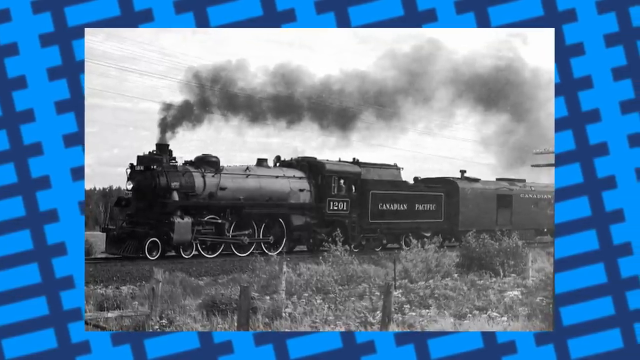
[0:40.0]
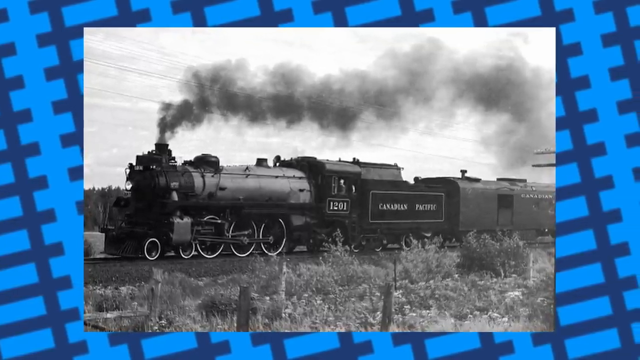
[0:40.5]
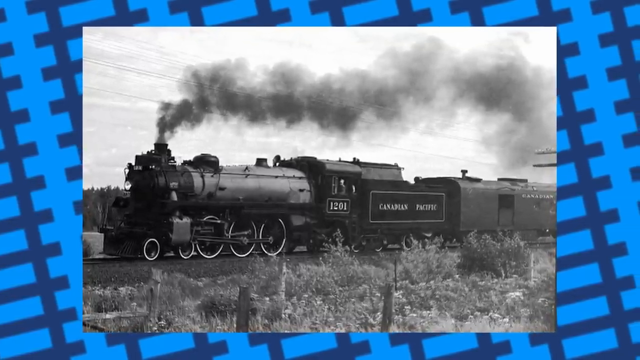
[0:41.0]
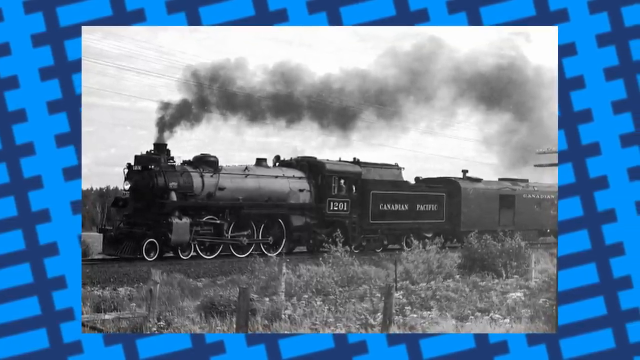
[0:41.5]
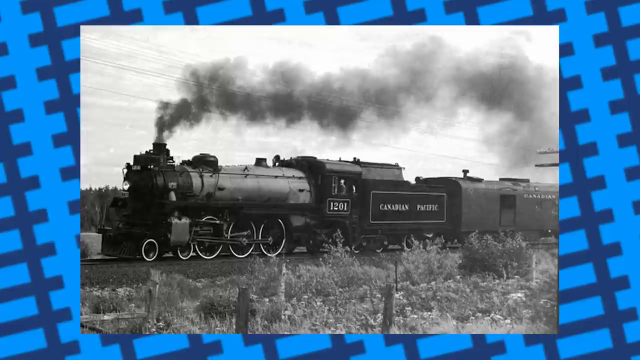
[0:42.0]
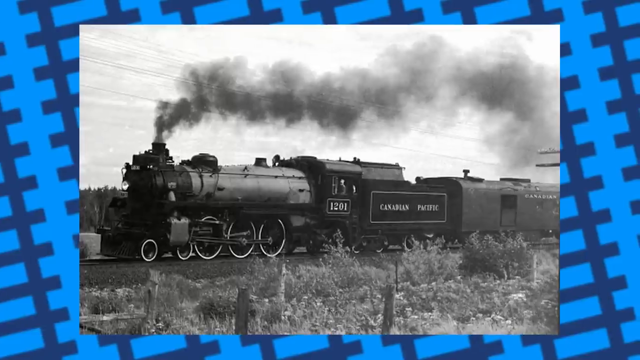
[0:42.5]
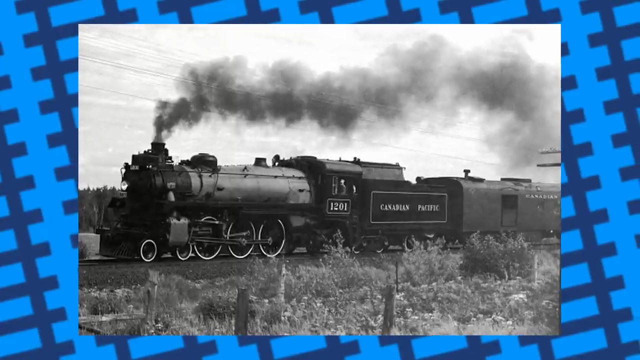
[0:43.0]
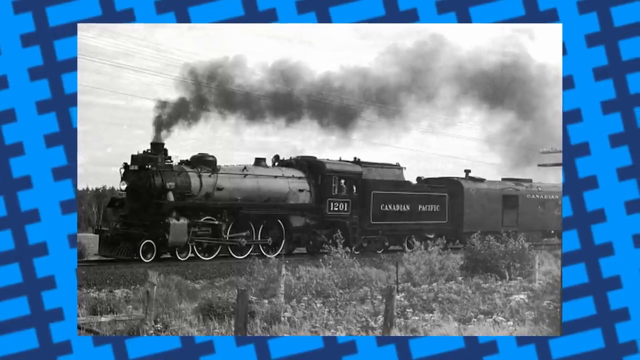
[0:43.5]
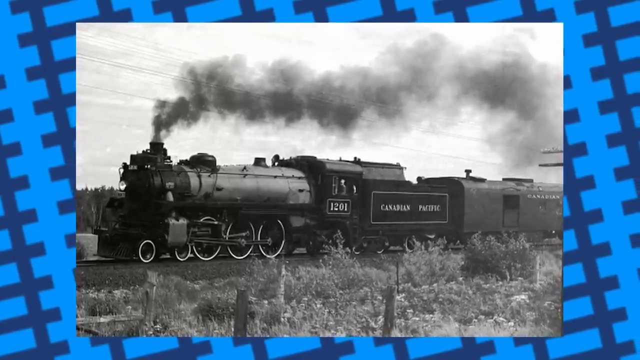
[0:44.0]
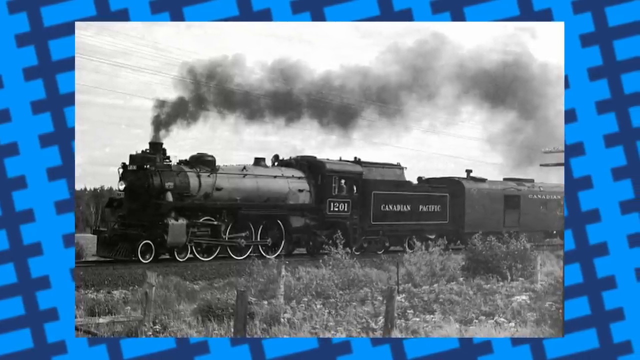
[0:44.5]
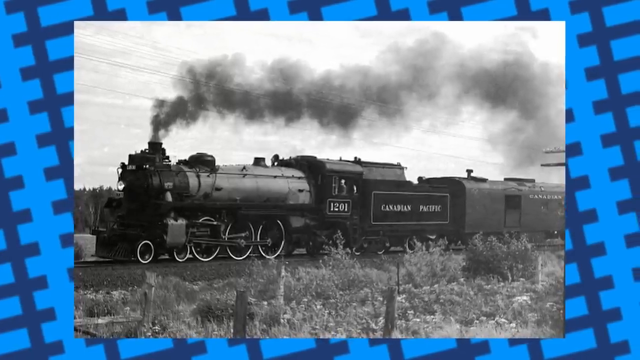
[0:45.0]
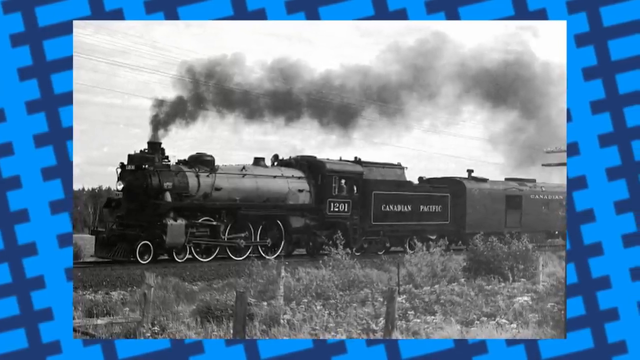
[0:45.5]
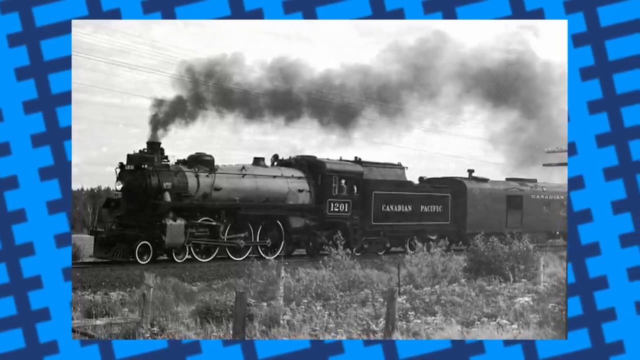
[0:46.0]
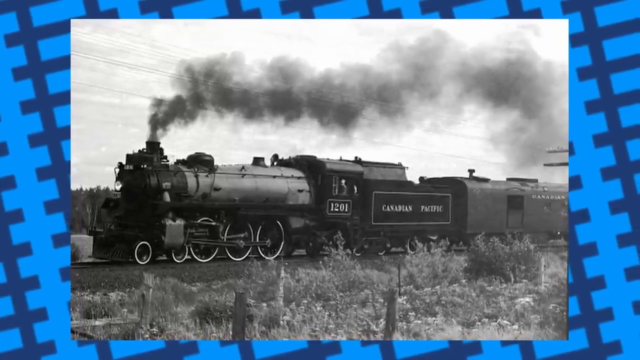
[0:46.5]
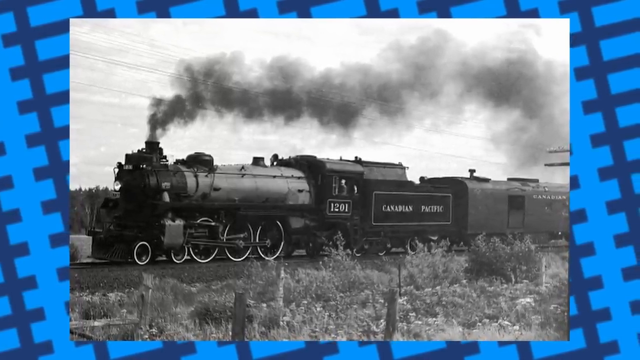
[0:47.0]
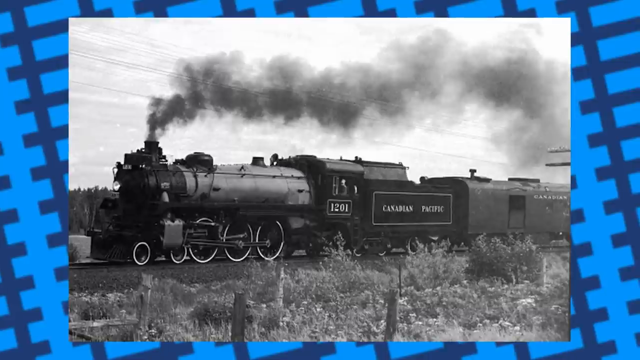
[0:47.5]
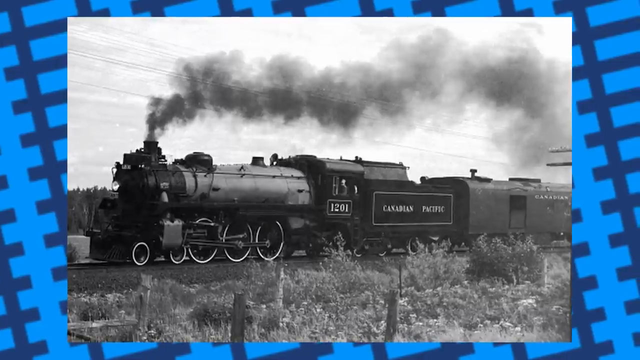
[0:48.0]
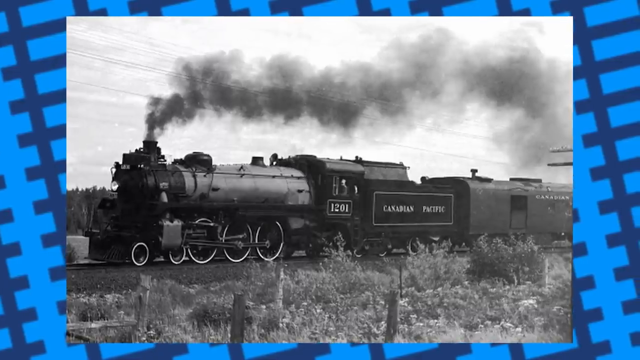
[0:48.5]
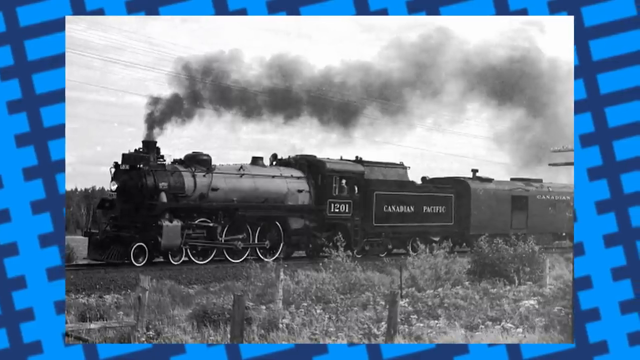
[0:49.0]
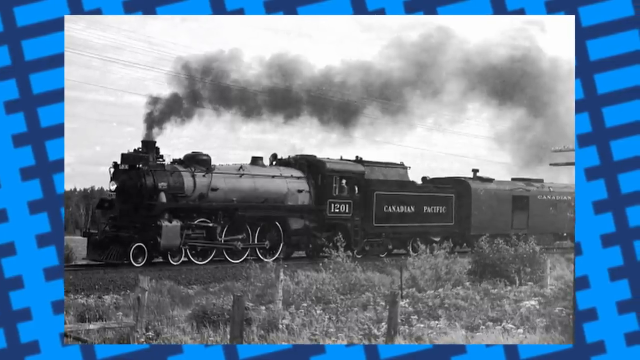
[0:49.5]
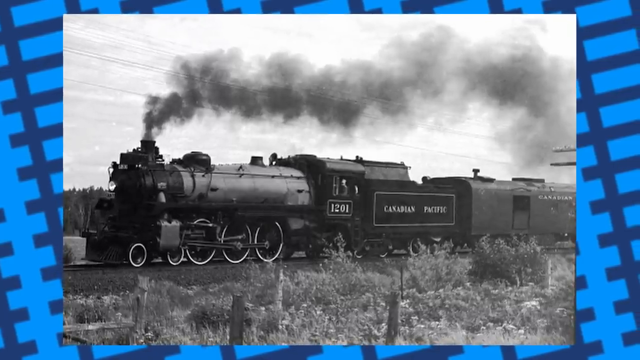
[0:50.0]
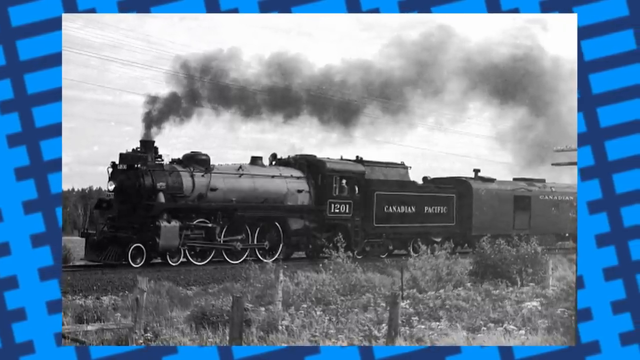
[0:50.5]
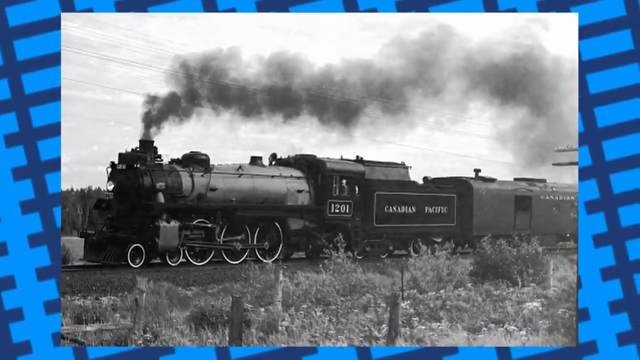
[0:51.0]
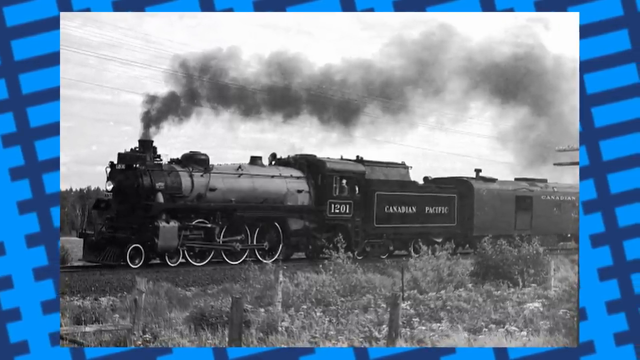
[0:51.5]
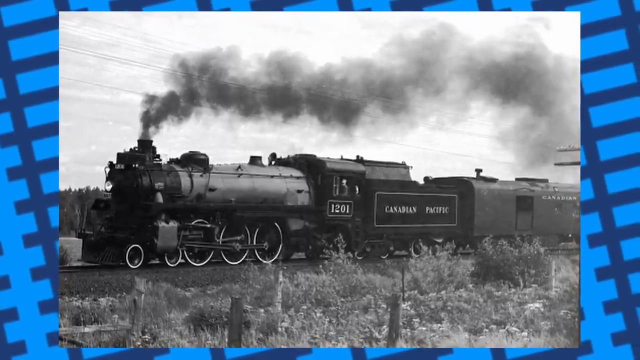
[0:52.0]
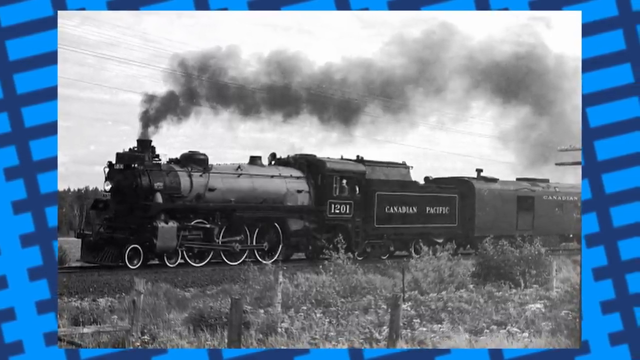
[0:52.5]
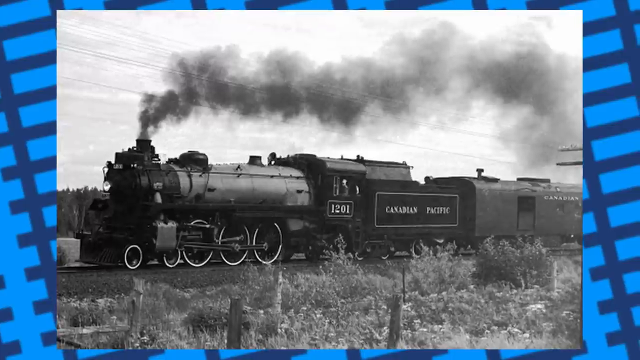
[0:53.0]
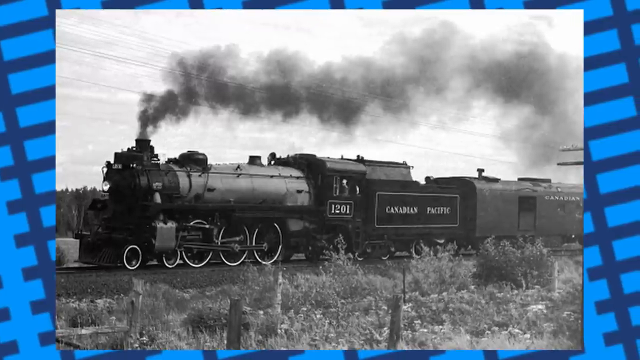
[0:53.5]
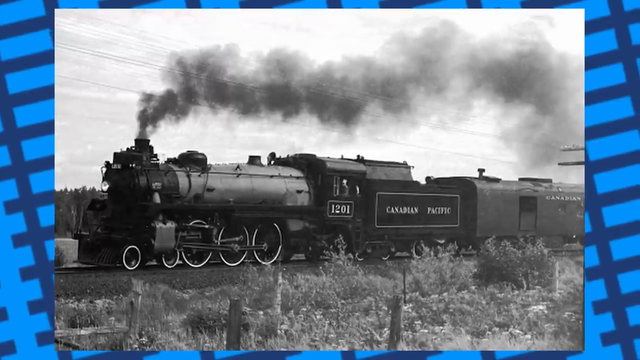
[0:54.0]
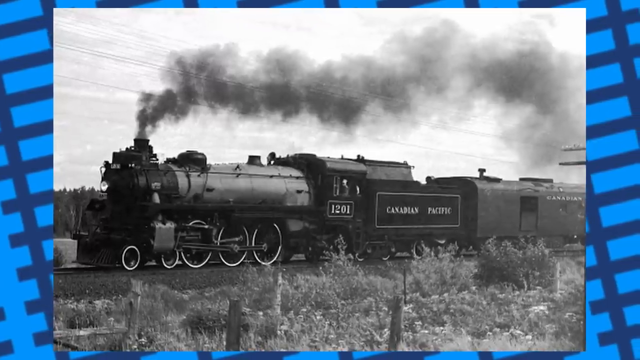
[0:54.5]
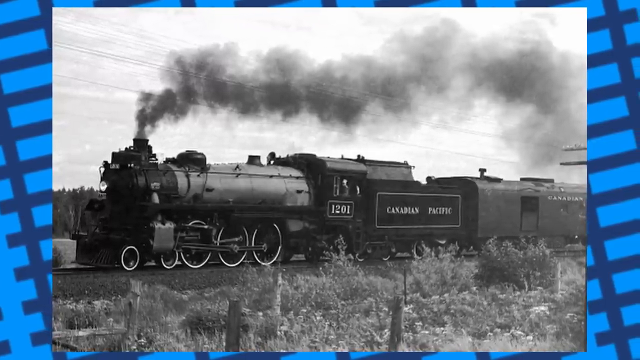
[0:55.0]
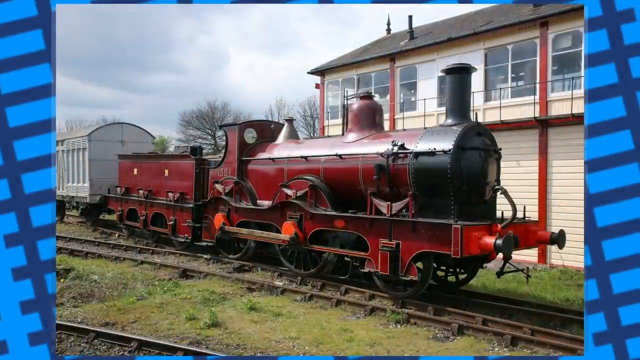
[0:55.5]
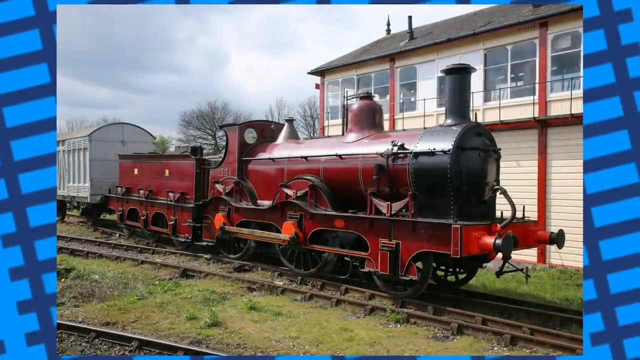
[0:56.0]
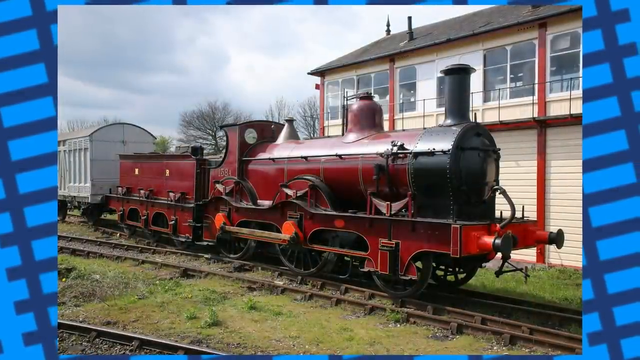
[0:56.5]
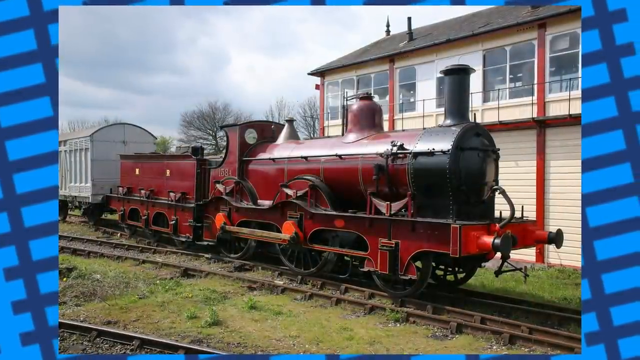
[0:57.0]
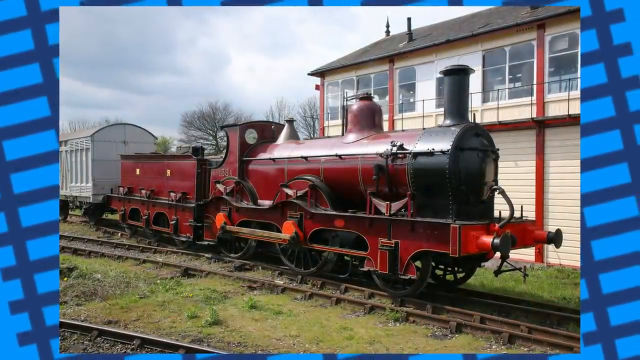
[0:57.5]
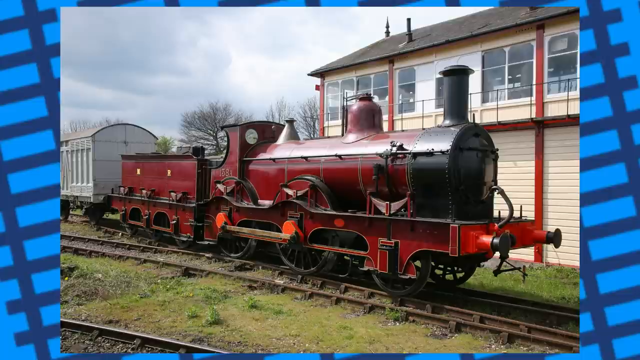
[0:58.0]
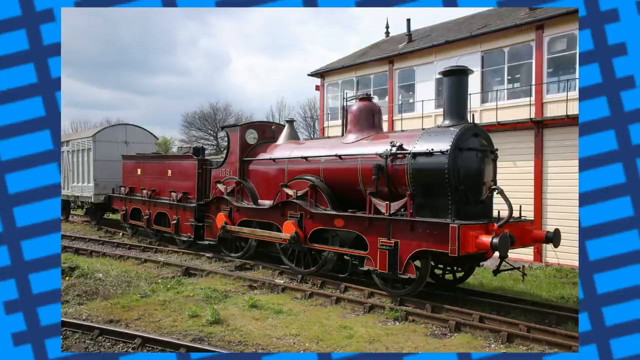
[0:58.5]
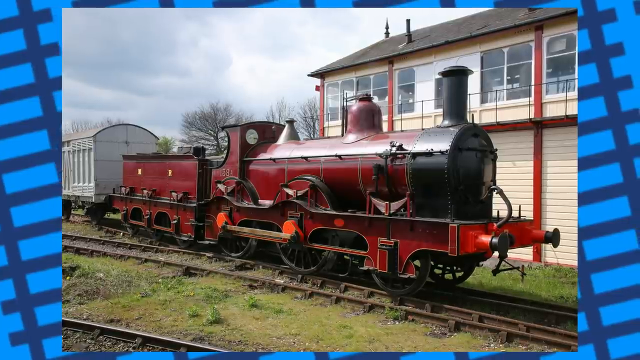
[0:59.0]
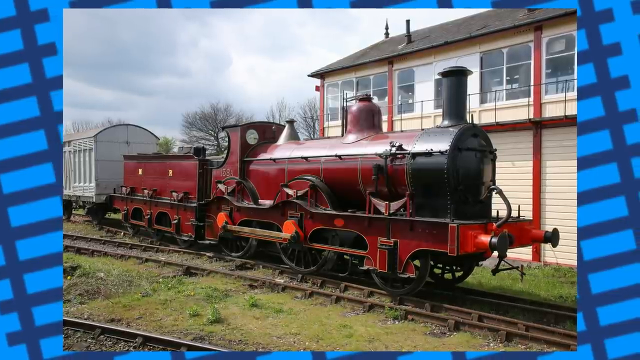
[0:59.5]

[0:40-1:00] The black and white picture of the train is on screen, with what looks like bushes at the bottom of the screen, set on the same light blue background with dark blue train tracks. It switches to a color picture with a white two-story building in the background: white siding on the bottom with red accents, windows up top, and a black slanted roof. This is a different train; its front is red with a black stack, and the cars behind it are white or light gray. It looks to be traveling on flatter land, with trees without leaves in the background and a still-overcast sky. The video seems to show a series of different trains.